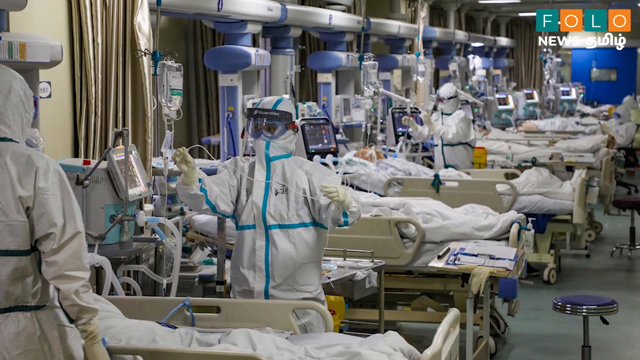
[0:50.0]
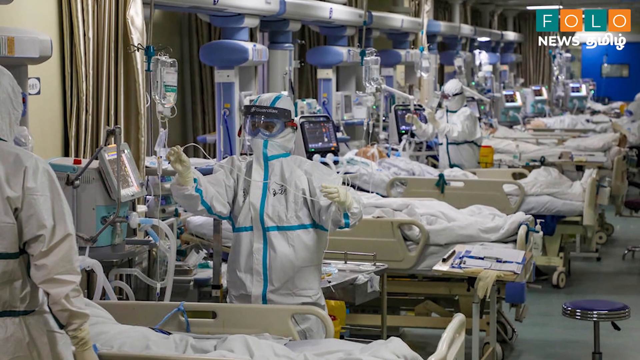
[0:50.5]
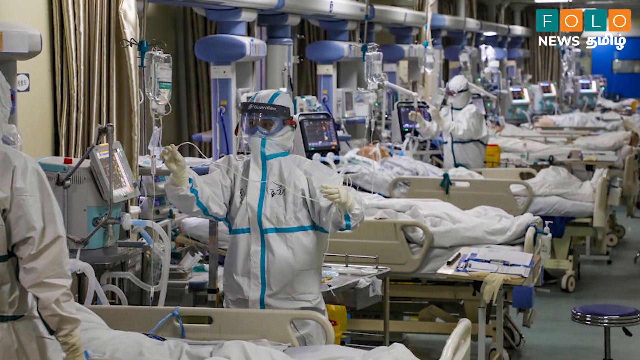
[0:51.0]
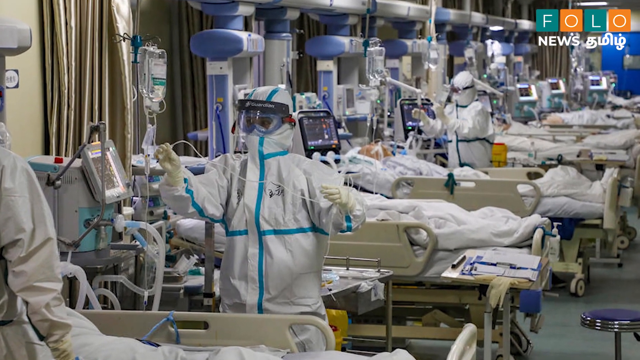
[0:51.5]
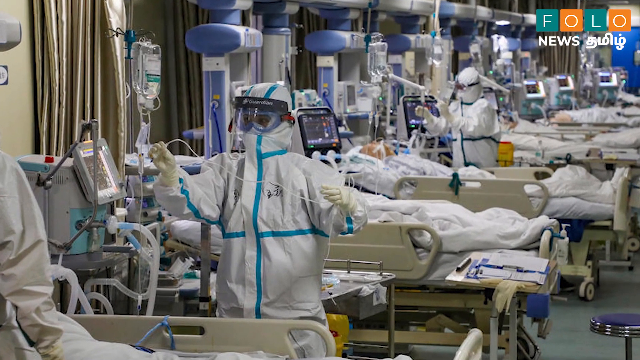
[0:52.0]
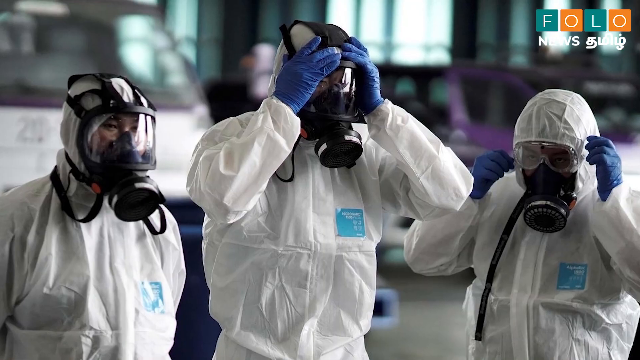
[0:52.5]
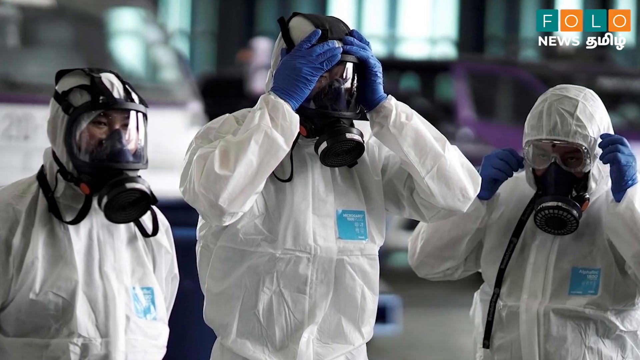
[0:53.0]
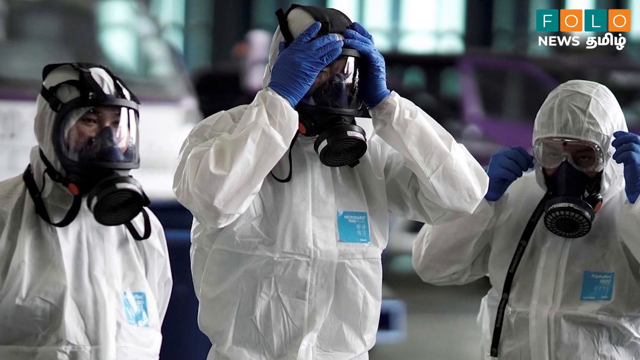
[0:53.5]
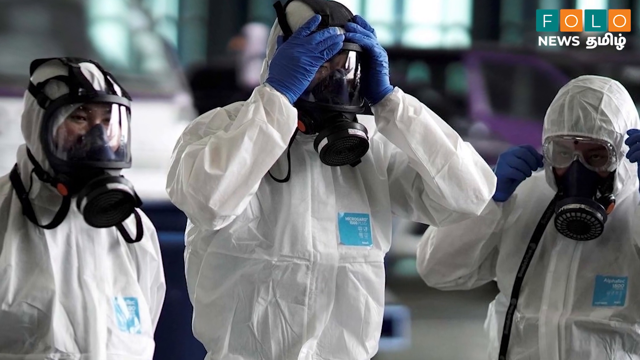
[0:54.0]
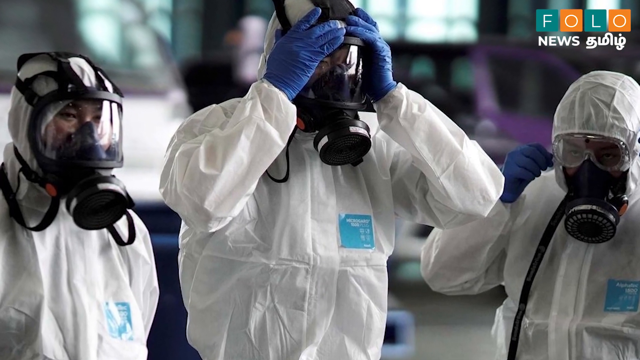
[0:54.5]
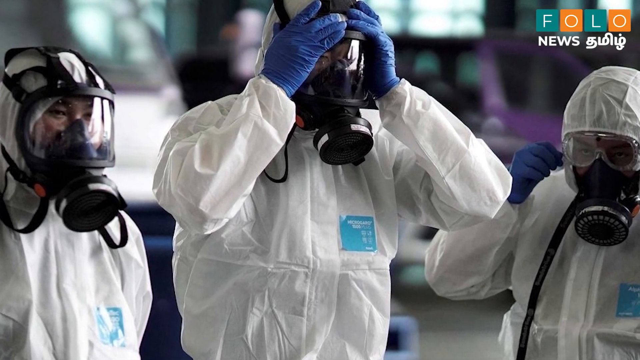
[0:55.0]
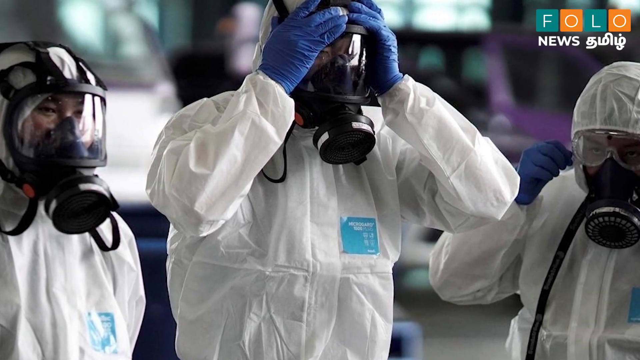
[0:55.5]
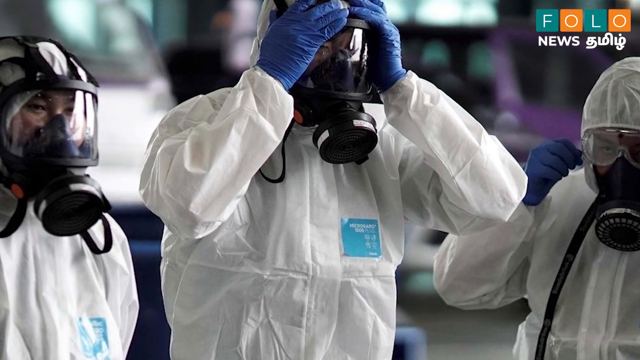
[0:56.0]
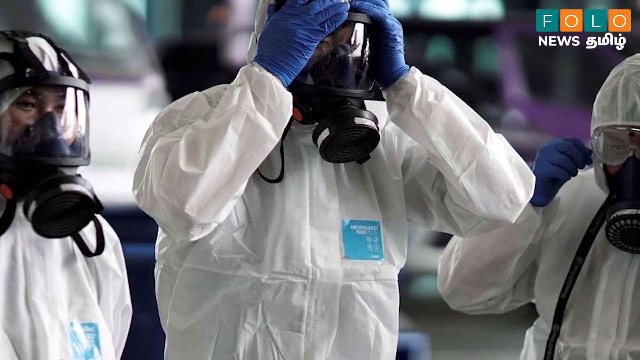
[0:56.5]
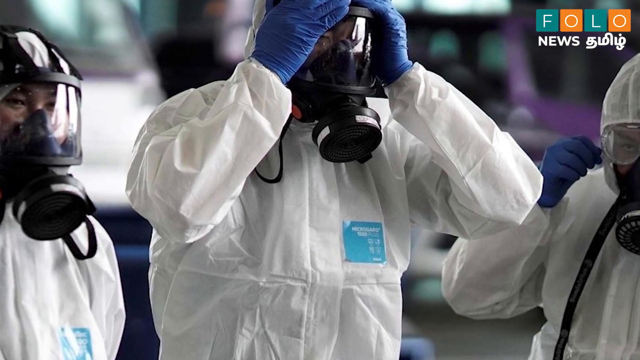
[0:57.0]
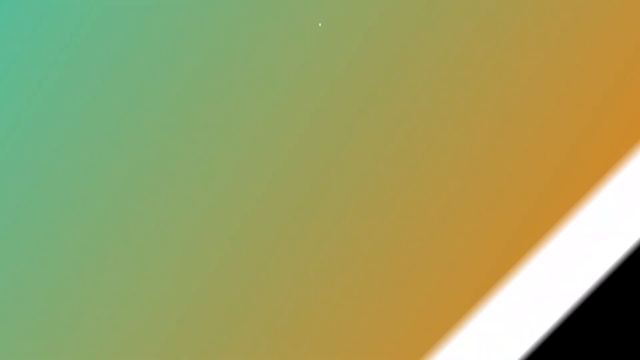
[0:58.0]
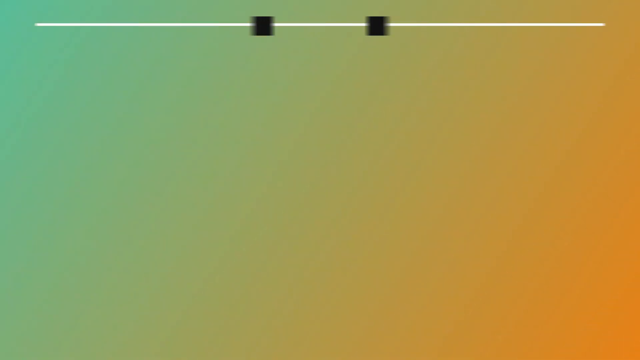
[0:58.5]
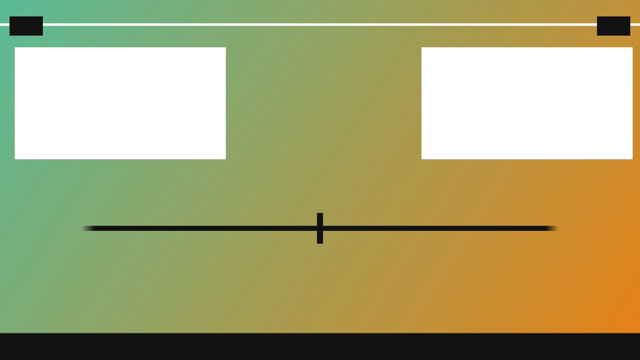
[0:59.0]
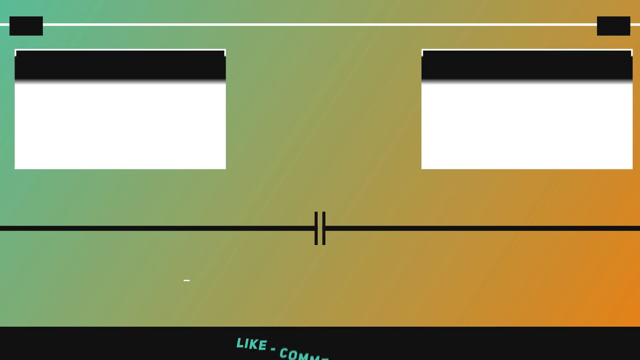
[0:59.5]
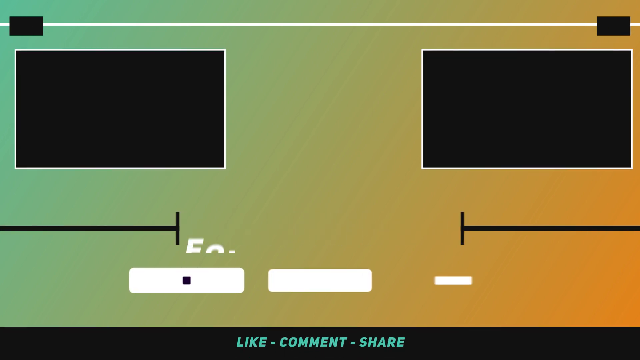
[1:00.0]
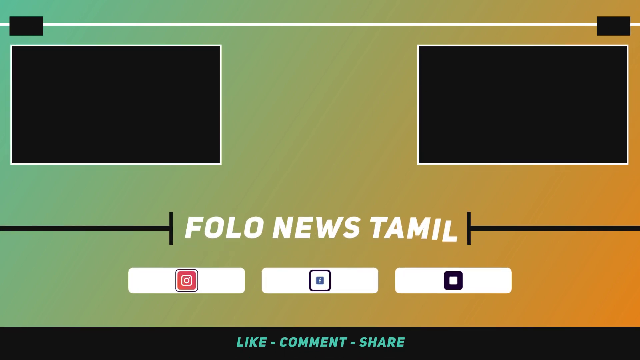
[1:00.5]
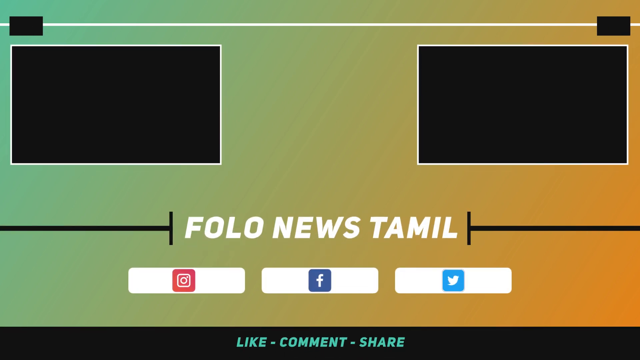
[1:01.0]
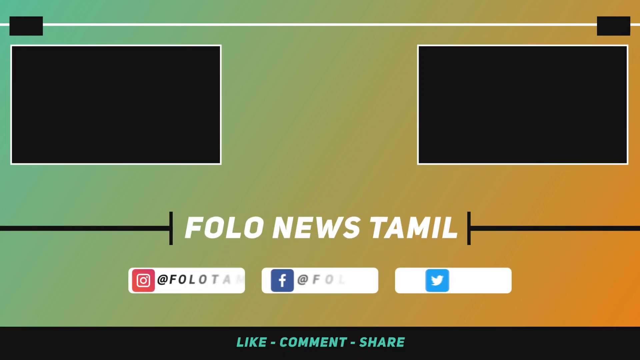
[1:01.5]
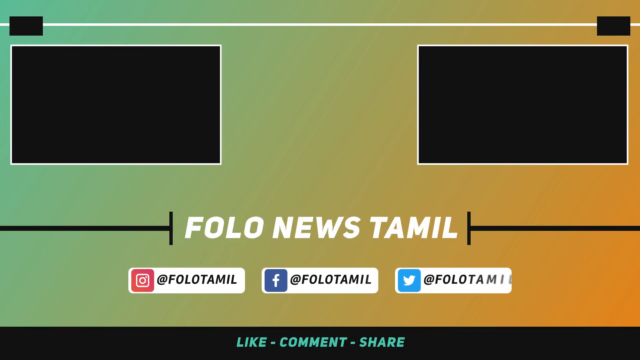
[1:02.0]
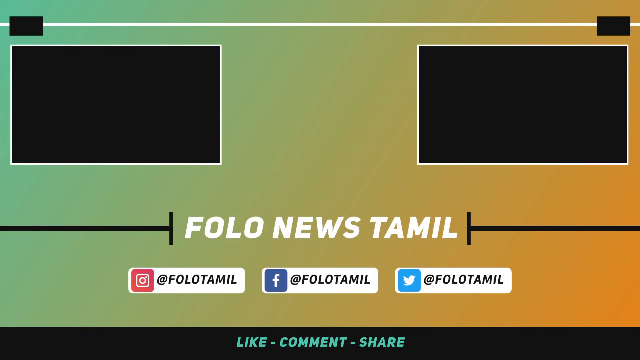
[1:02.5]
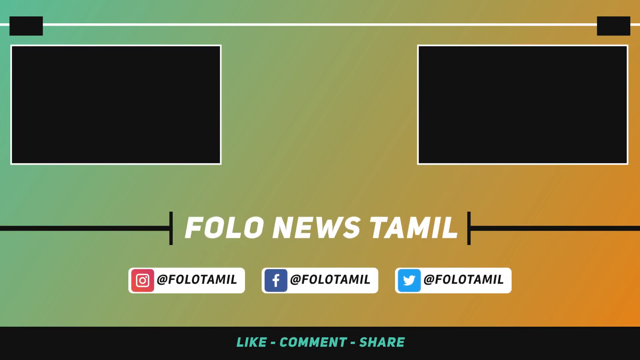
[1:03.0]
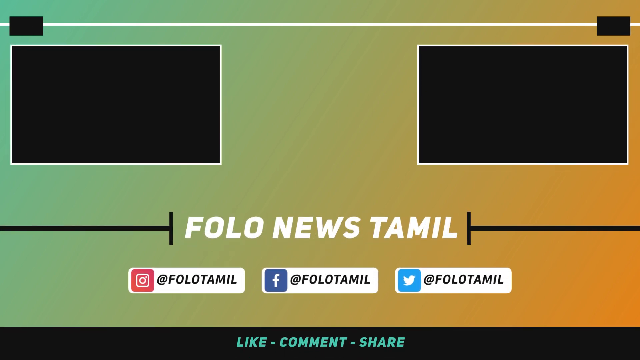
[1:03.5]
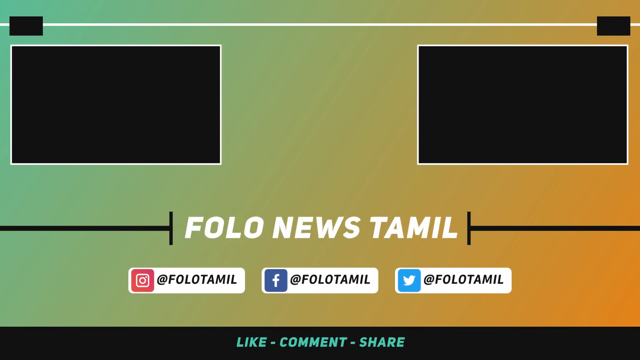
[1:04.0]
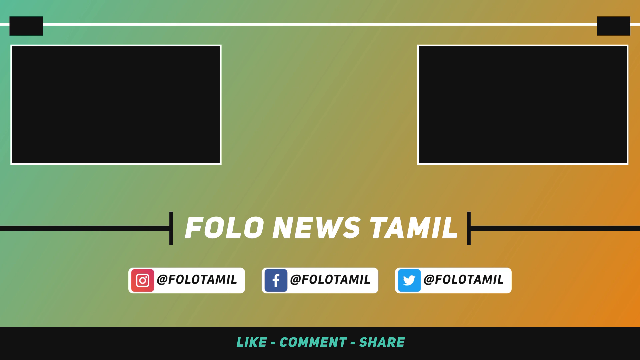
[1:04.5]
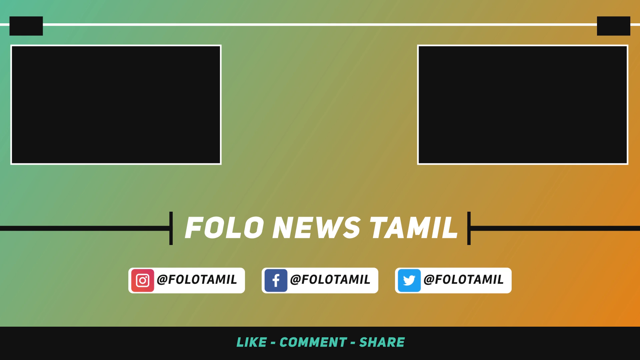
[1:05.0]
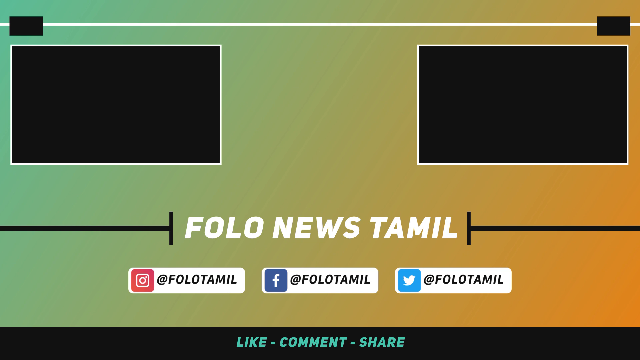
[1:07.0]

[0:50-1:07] Several people appear to be lined up in beds at the hospital, attached to respirators. Health care workers in hazmat suits are positioned at some of the beds and may be changing wires or checking IVs, though it is hard to tell. Many people in this ward are getting treatment, presumably for COVID. Next, a photo shows three people in white hazmat suits putting on gas mask respirators. The video then cuts to what appears to be the news channel's page, likely on YouTube. It says "Follow News Tamil," Tamil probably being the language and alphabet used. At the top are two black boxes that apparently link to other videos. At the bottom are the channel's social media tags: Instagram "Photo Tamil," Facebook "Photo Follow Tamil," and Twitter "Follow Tamil." Underneath it says "like, comment, share."